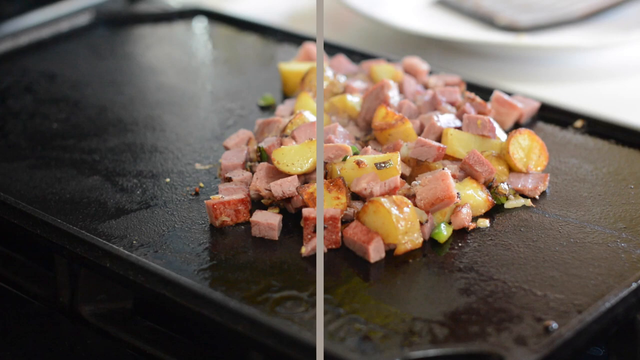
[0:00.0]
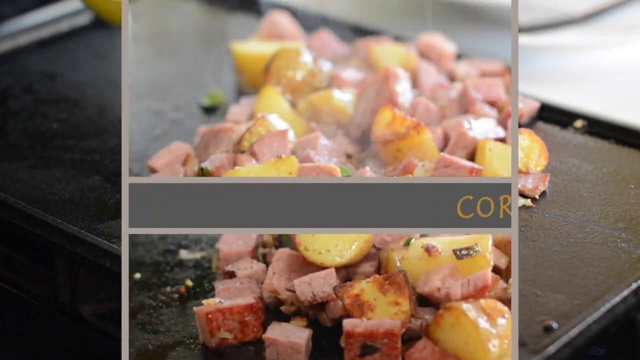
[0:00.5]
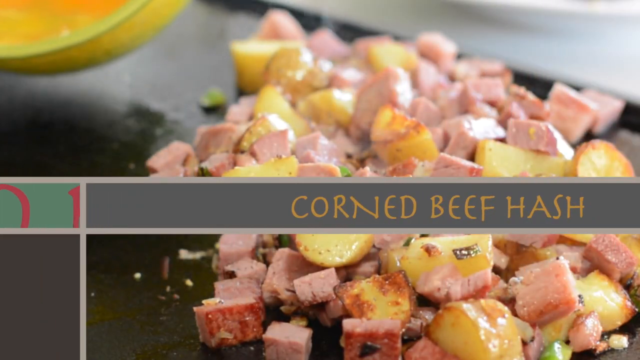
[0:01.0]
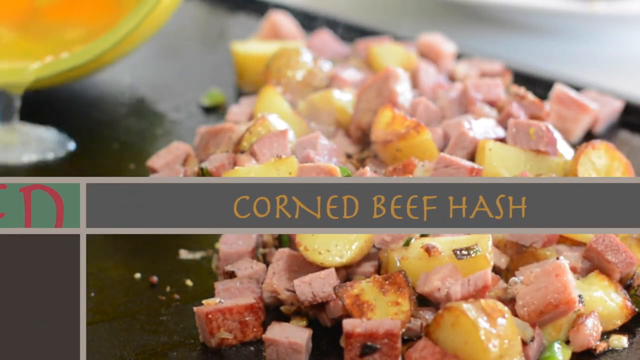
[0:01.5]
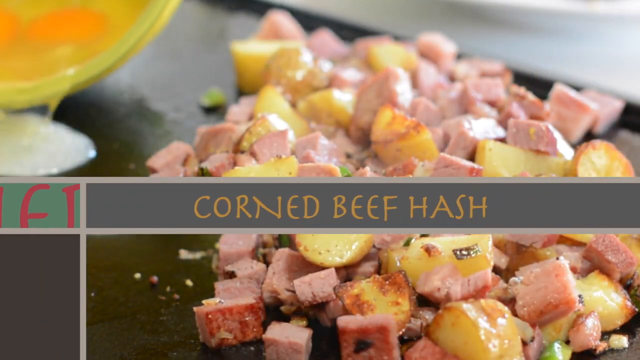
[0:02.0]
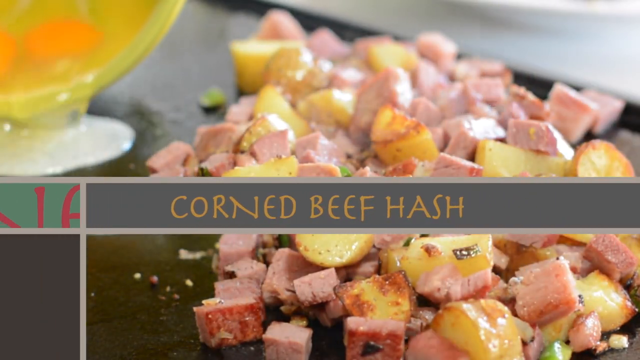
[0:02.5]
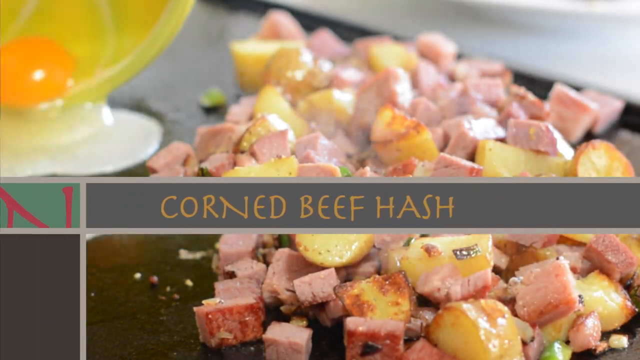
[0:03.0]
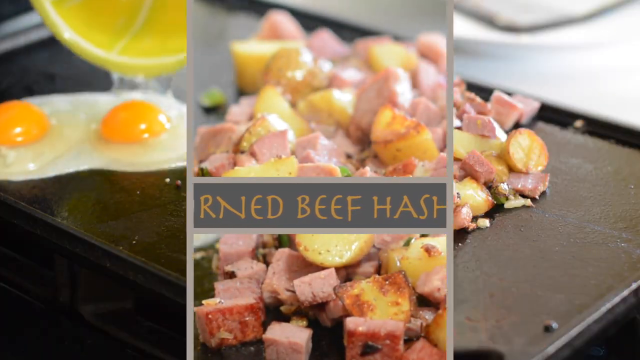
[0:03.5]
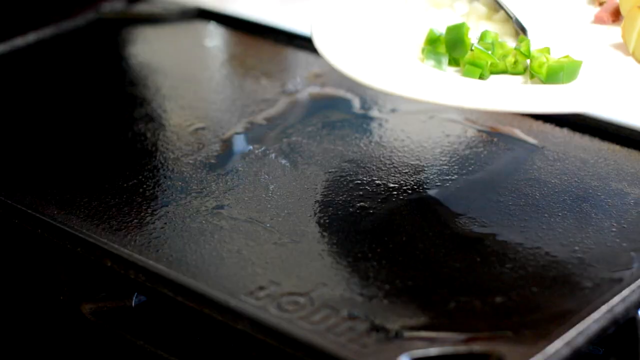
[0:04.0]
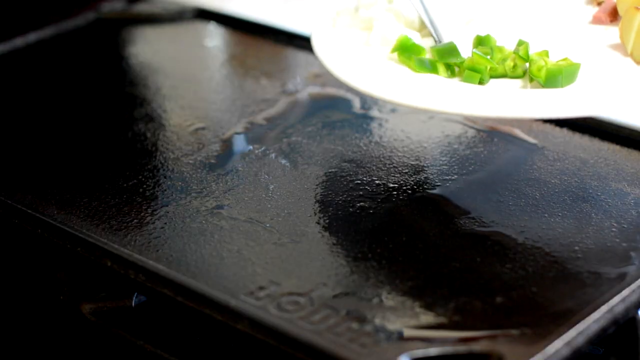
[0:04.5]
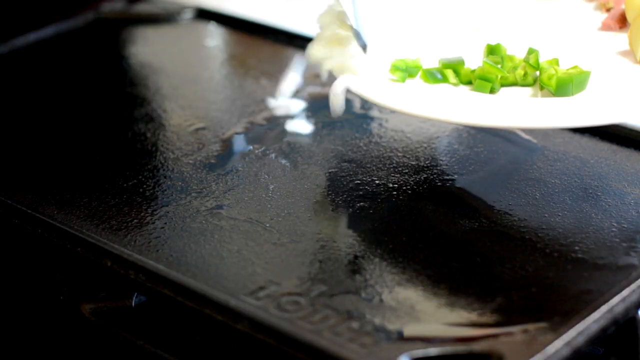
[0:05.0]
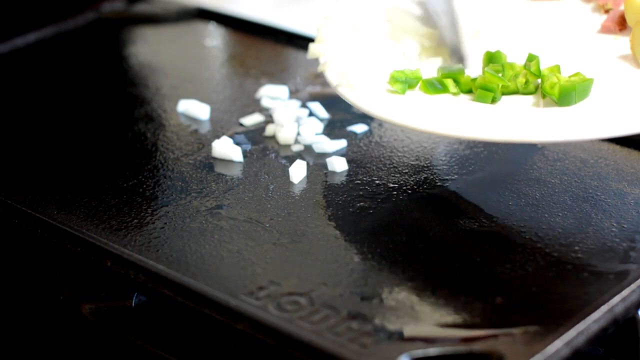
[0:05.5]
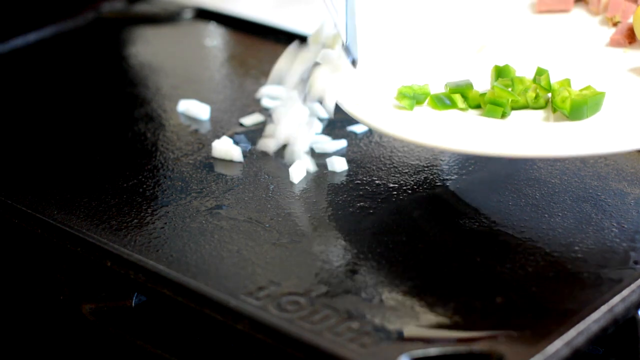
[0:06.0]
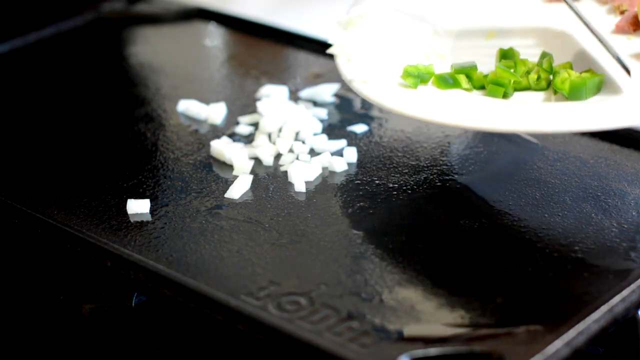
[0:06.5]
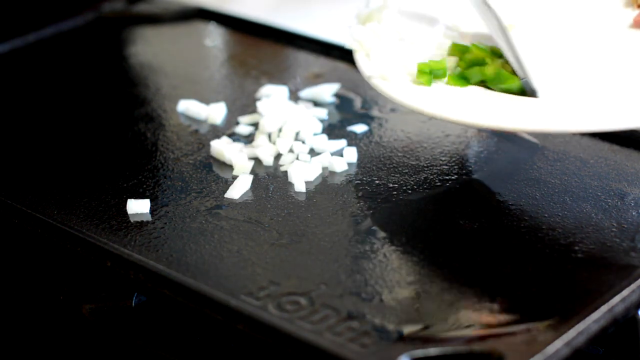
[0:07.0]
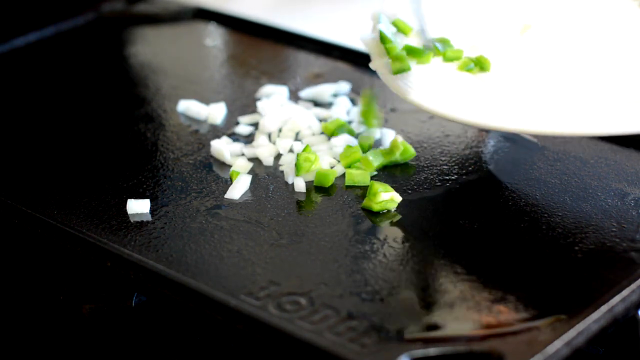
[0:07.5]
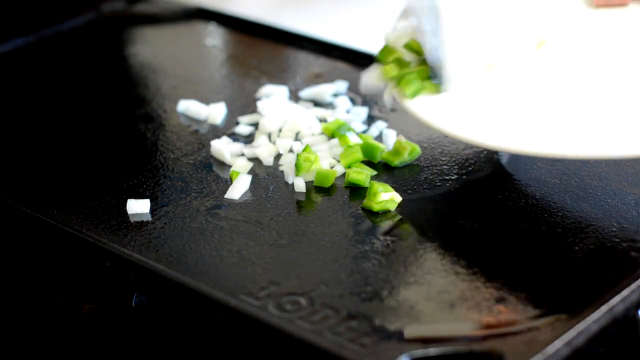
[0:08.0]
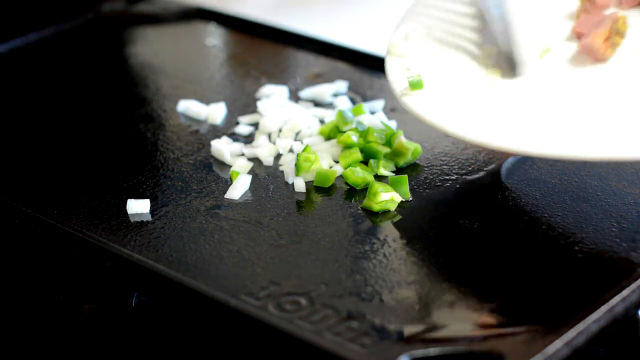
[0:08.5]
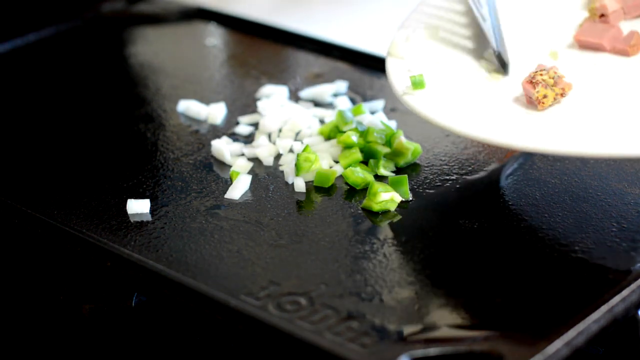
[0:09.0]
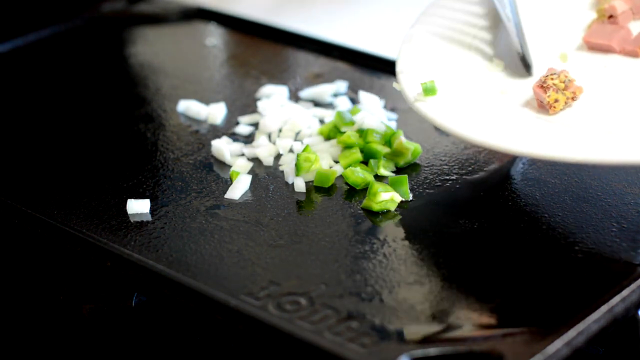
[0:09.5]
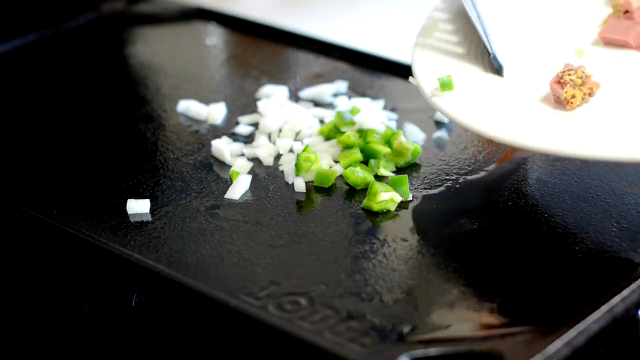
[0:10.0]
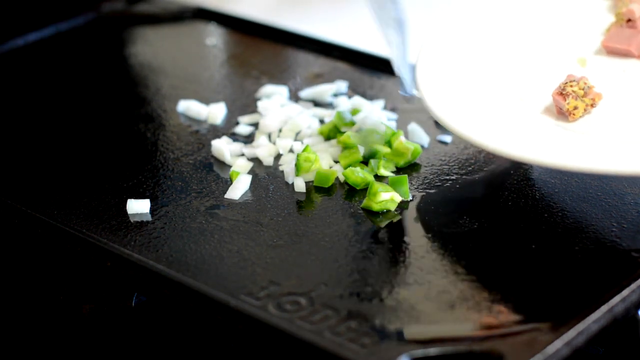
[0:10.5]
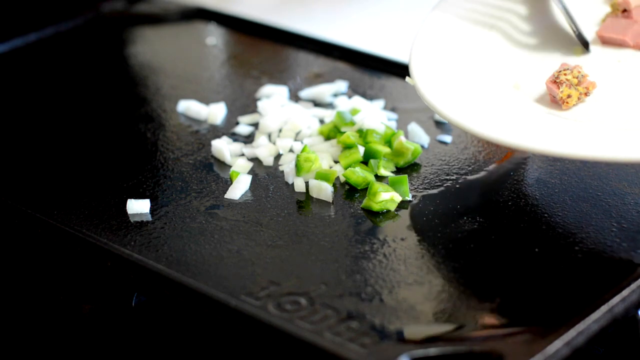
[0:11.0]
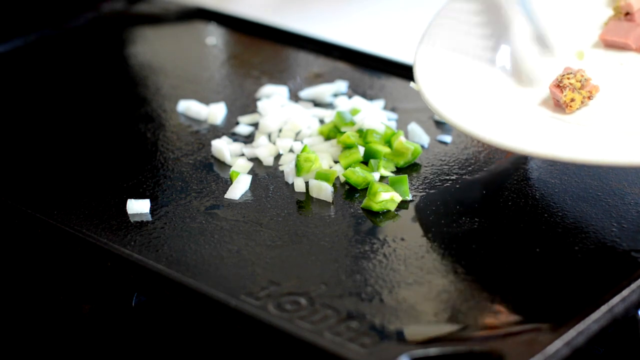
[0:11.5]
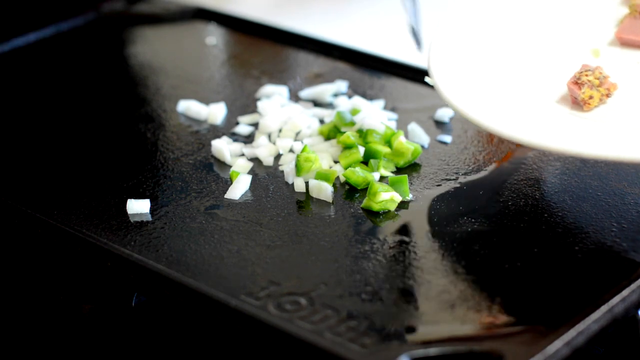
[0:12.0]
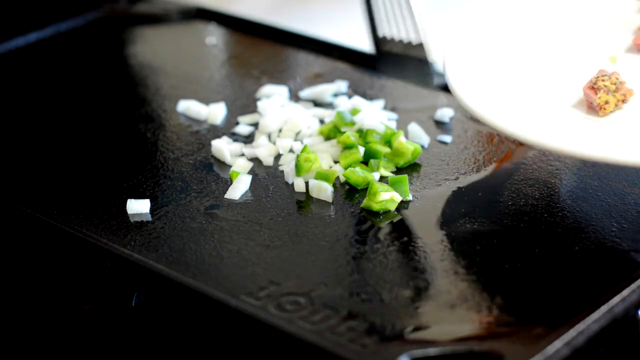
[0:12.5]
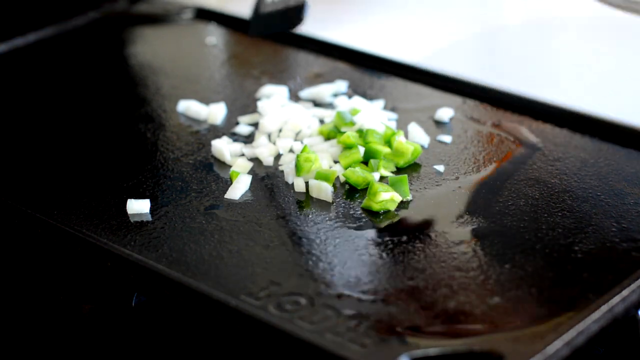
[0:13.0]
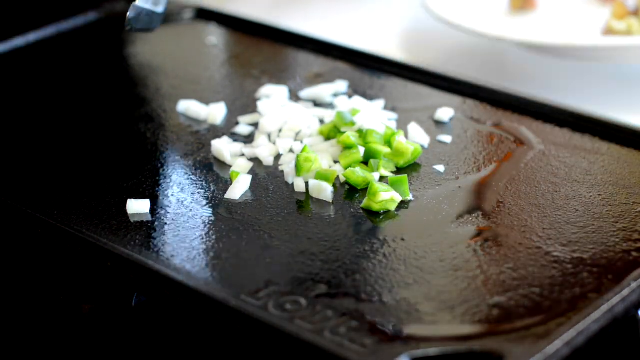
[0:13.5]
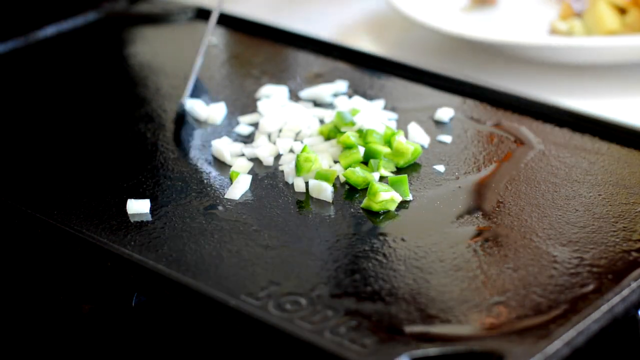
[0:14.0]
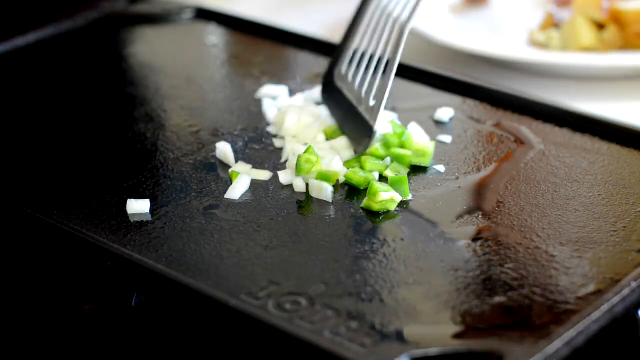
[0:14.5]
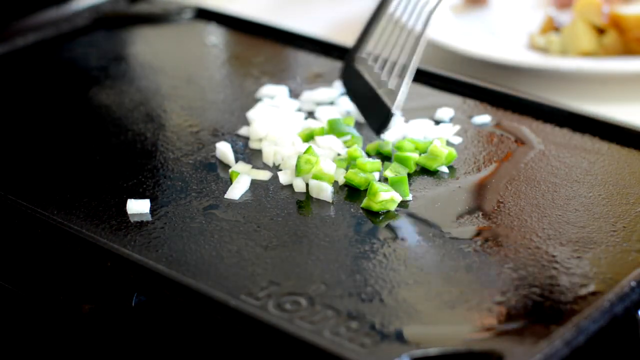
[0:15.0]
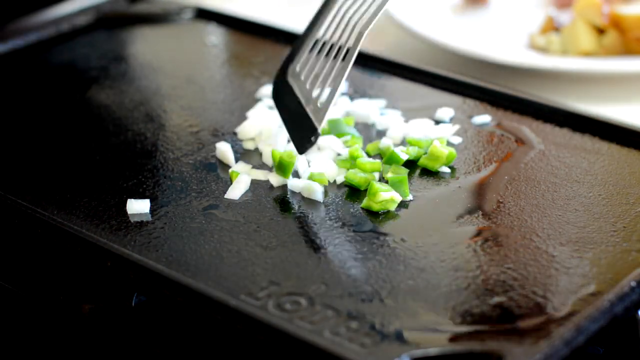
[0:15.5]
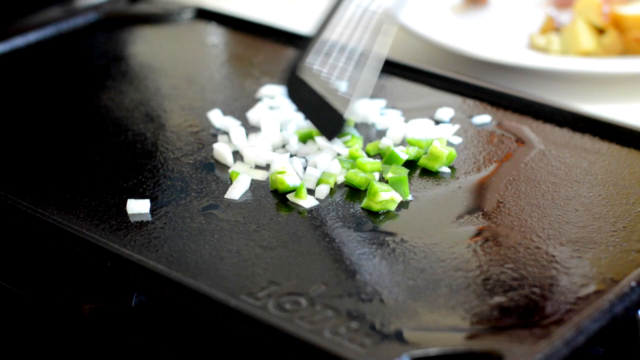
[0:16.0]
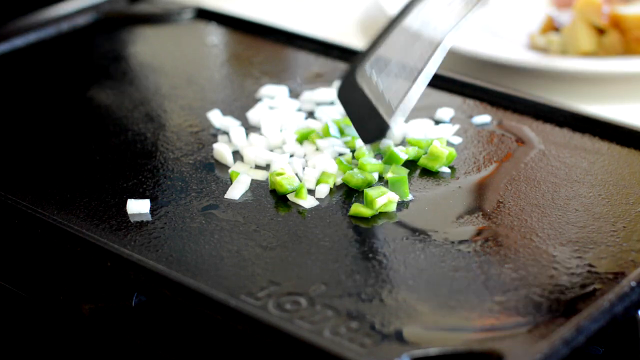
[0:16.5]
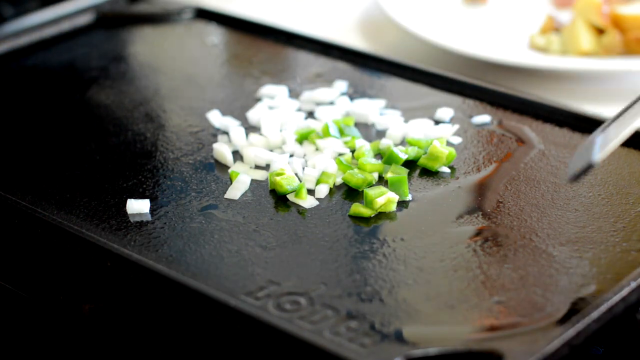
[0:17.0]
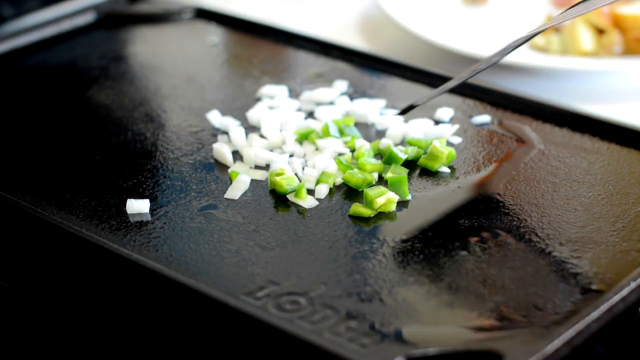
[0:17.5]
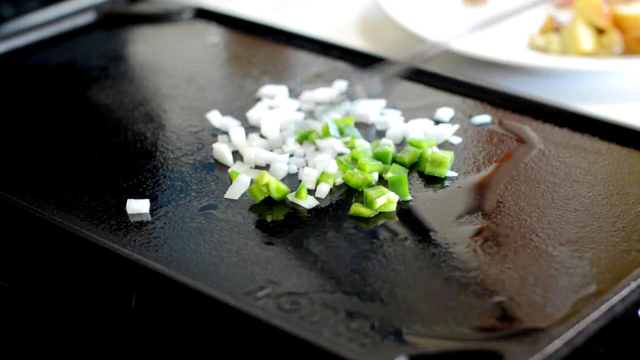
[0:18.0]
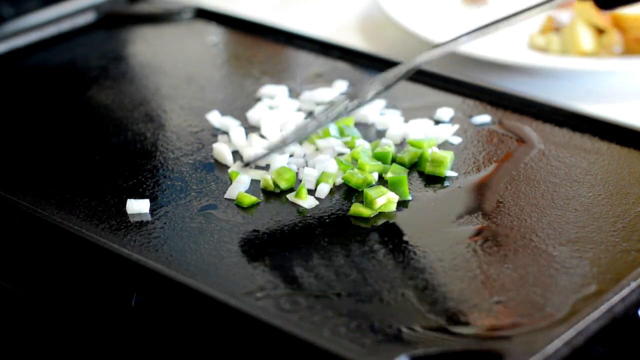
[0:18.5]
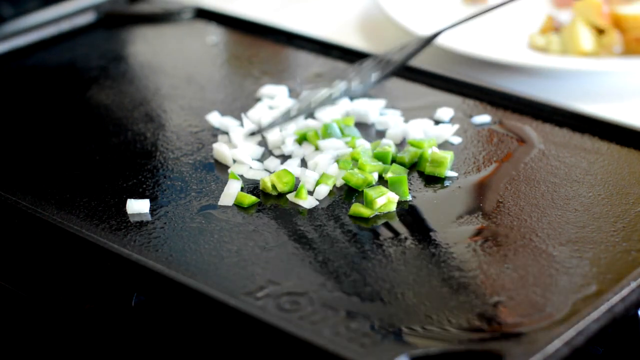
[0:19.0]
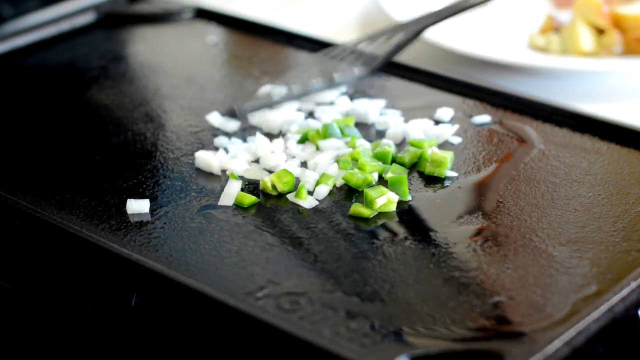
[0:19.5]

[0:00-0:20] Some cheese or vegetables, cut up, are on some kind of black tray. A computer graphic appears on the screen, starting from the center as a gray line that moves out and opens up to both sides, and the view zooms in on the food on the tray. Another computer graphic appears: a rectangle in the center reads "corned beef hash" in a stylized font. The tray appears to actually be a cooking platform or stove, and on the left side of the screen eggs are being poured onto the left side of the stove. The scene then switches to a white plate hovering over the stove while a fork or knife pushes some vegetables onto the black platform. Some meat is left over on the white plate, and the plate is put down in front of the black stove. A spatula then pushes the vegetables around a little on the black flat grill.